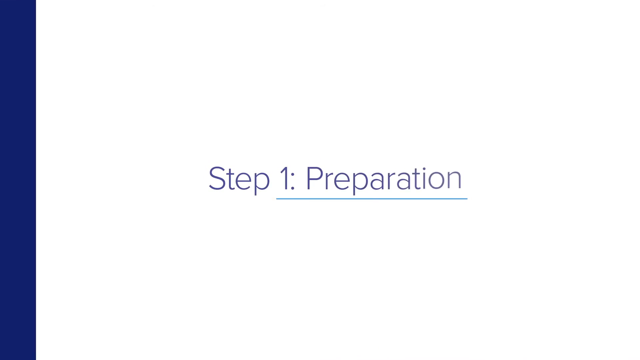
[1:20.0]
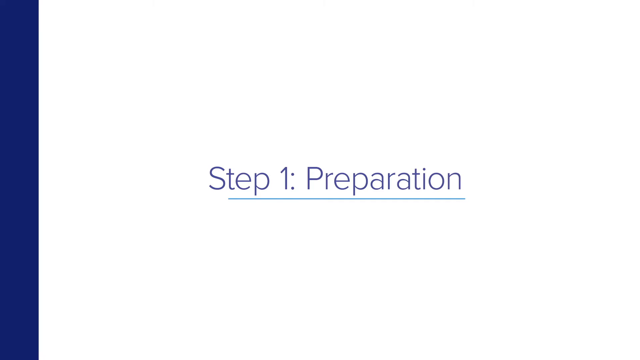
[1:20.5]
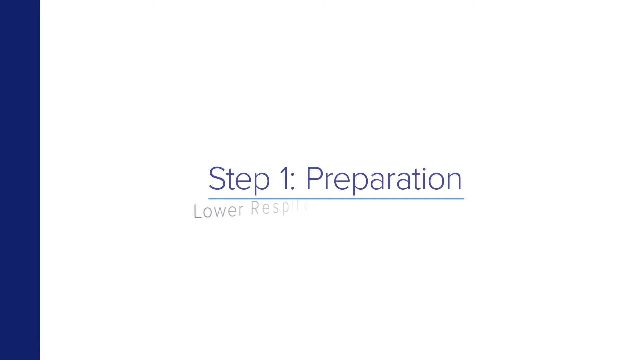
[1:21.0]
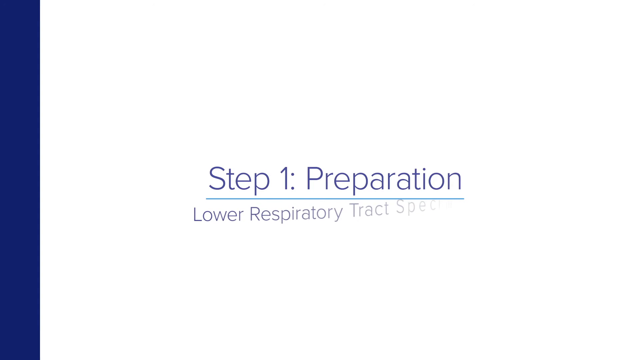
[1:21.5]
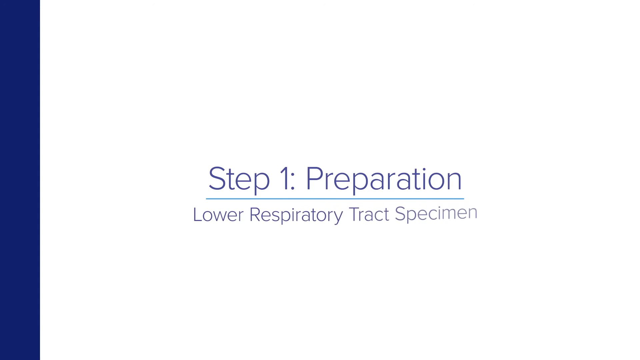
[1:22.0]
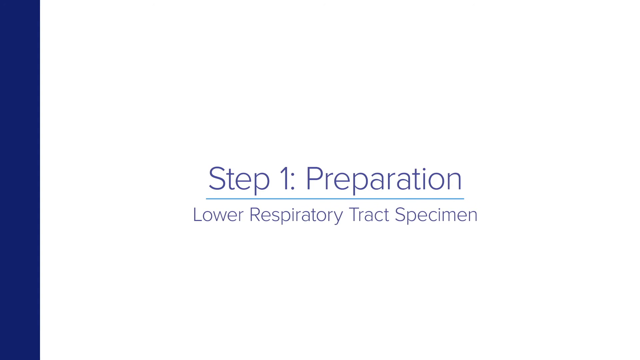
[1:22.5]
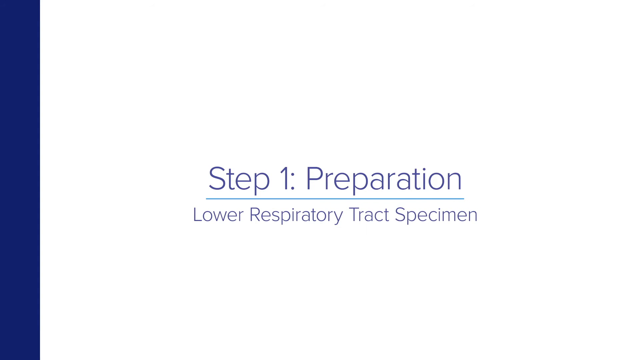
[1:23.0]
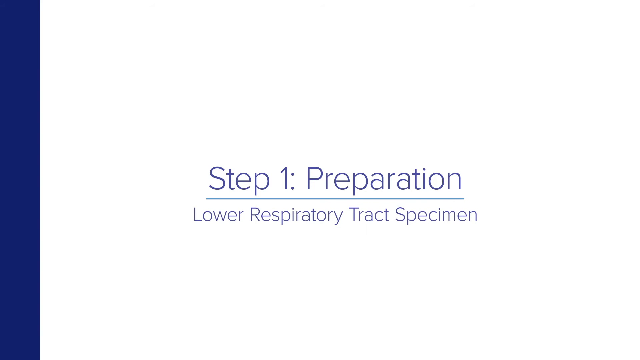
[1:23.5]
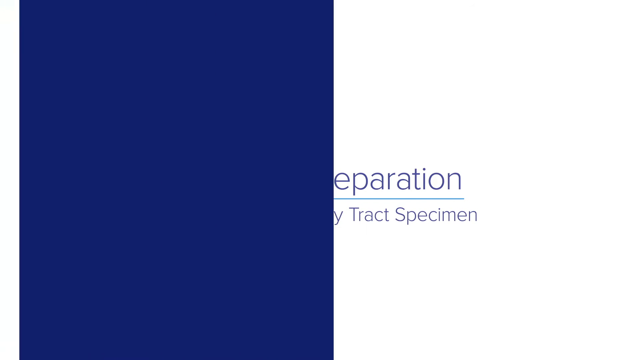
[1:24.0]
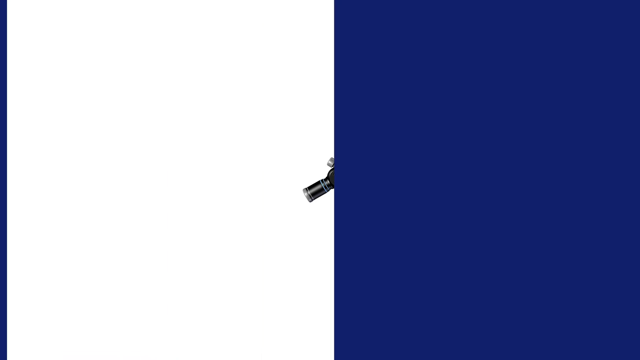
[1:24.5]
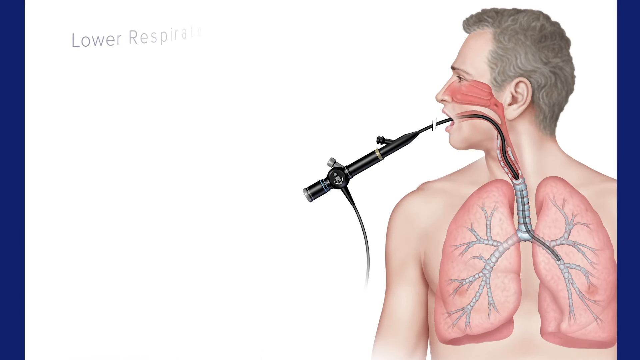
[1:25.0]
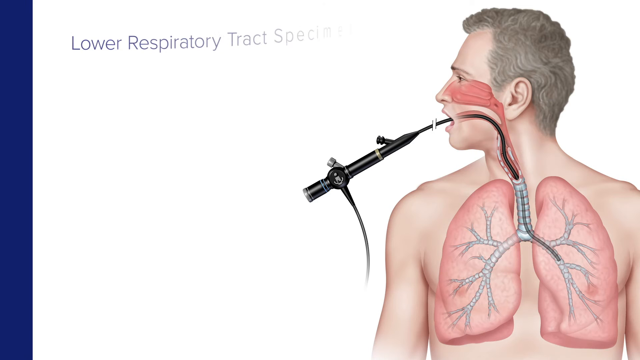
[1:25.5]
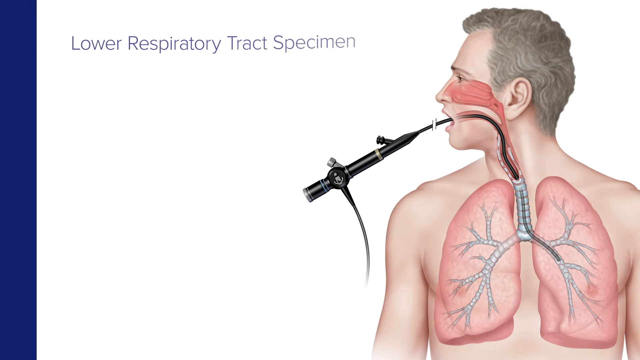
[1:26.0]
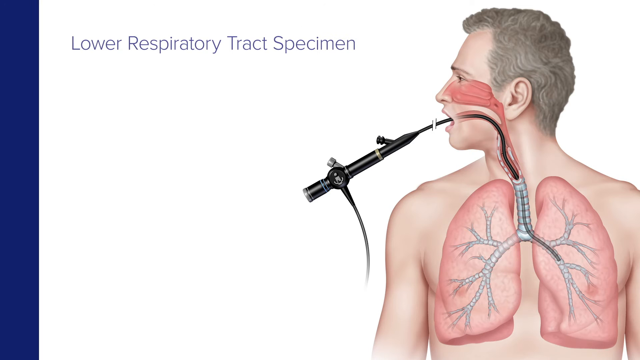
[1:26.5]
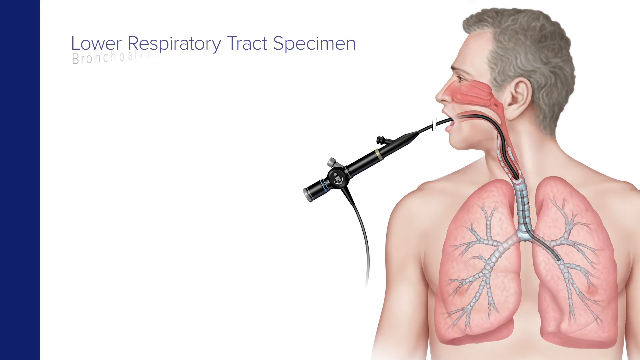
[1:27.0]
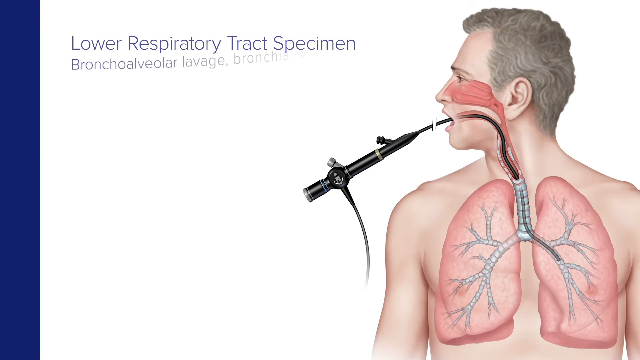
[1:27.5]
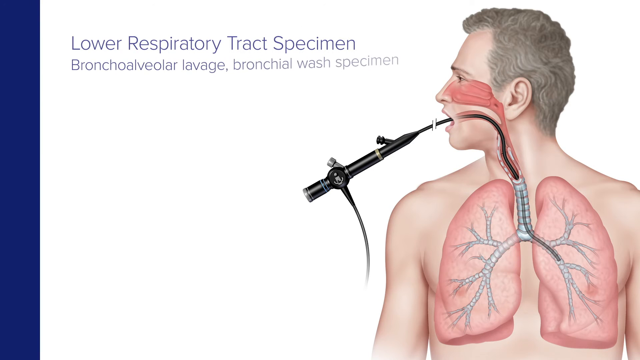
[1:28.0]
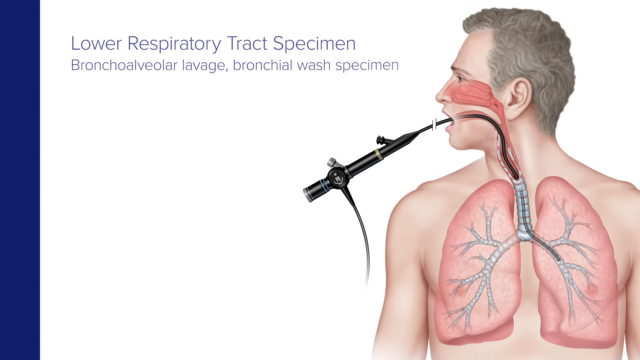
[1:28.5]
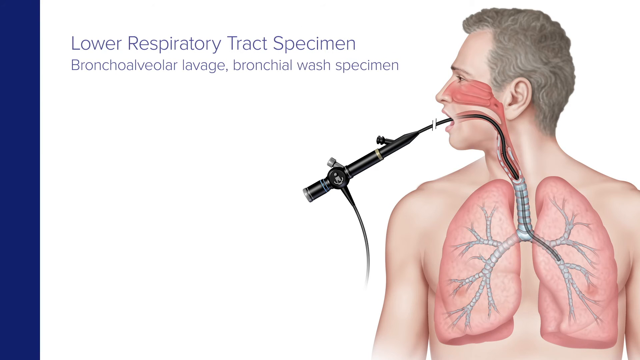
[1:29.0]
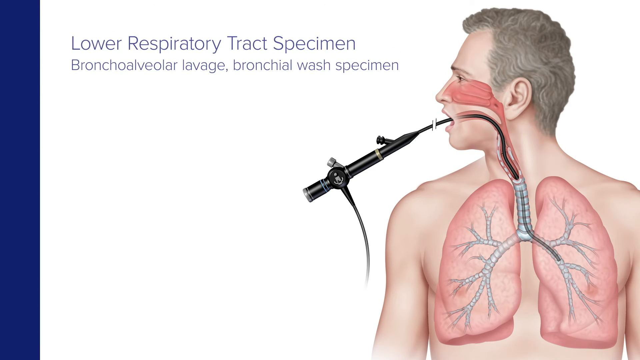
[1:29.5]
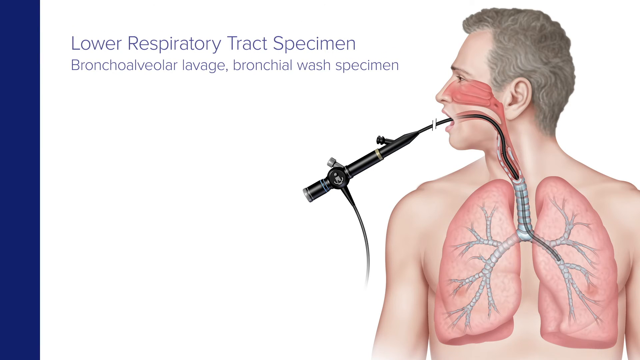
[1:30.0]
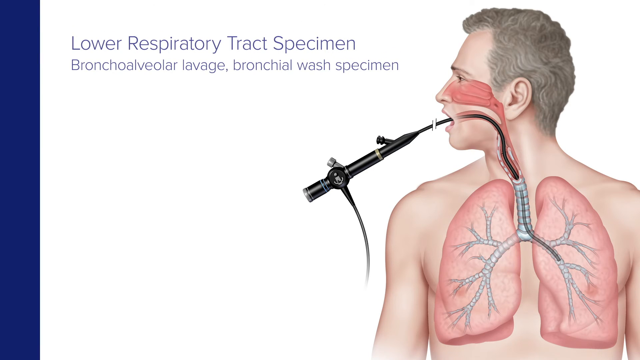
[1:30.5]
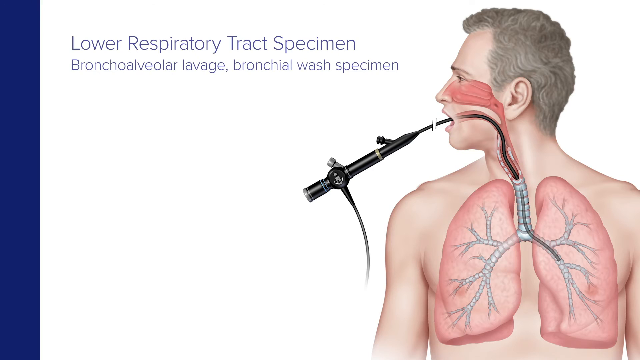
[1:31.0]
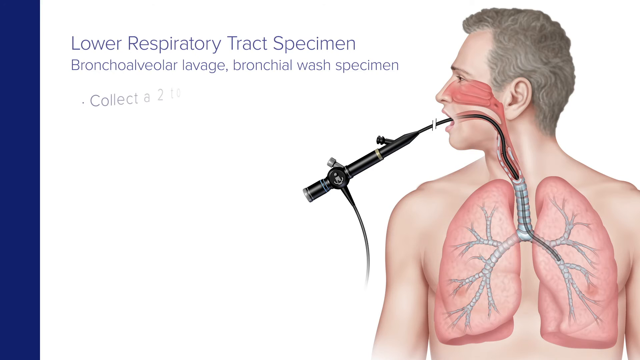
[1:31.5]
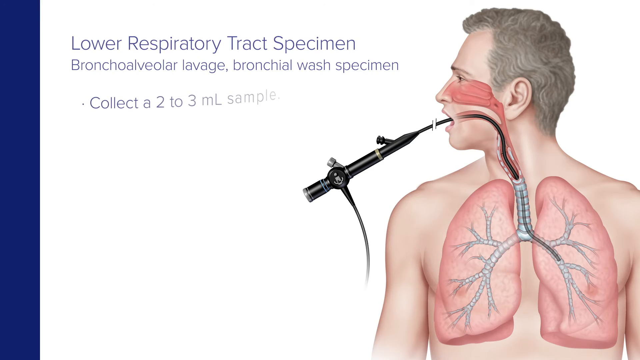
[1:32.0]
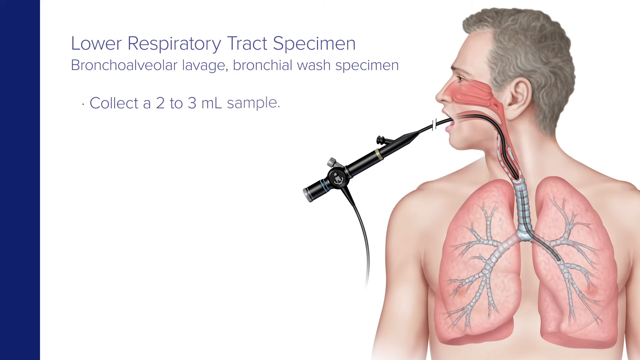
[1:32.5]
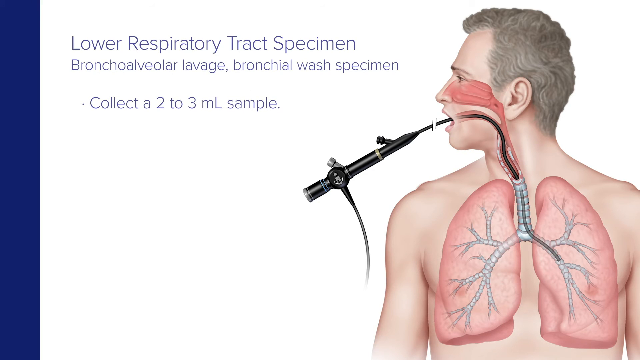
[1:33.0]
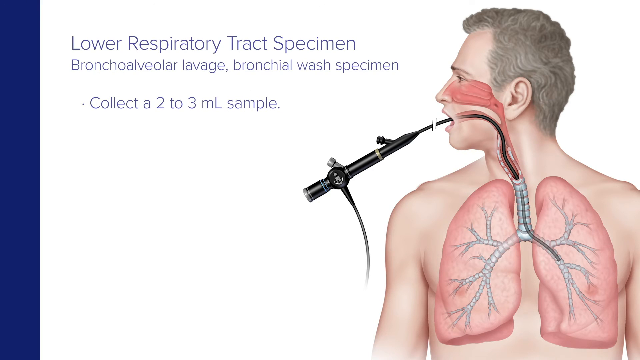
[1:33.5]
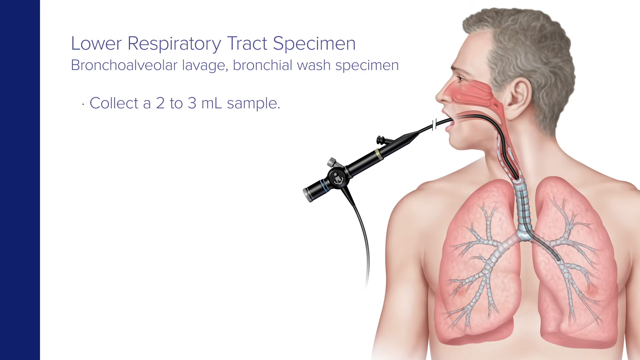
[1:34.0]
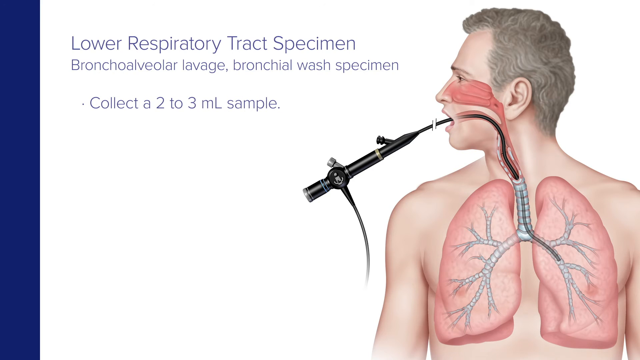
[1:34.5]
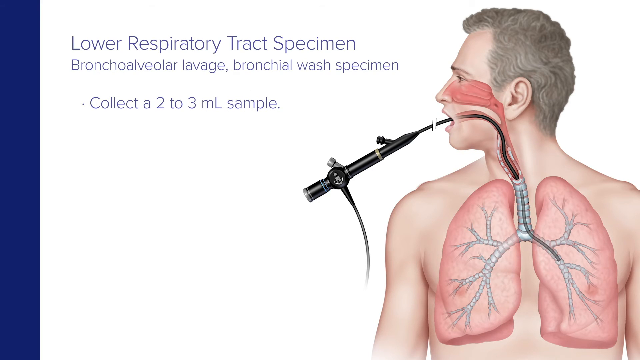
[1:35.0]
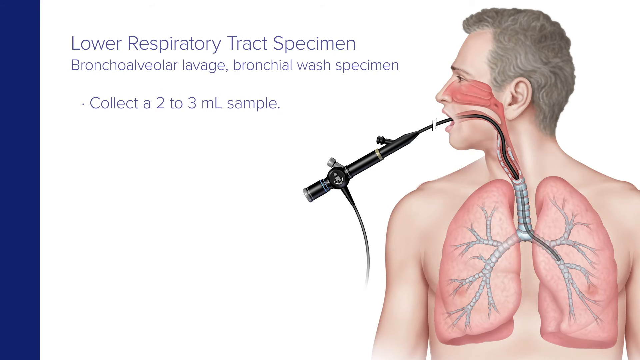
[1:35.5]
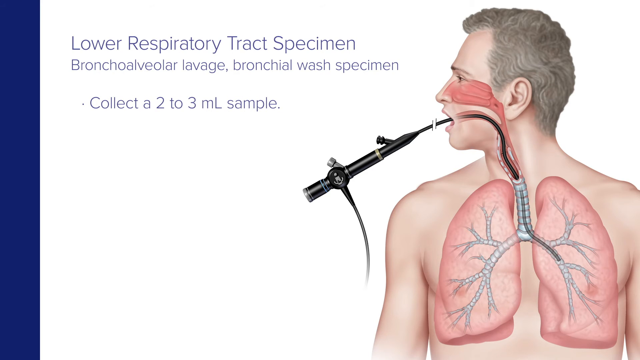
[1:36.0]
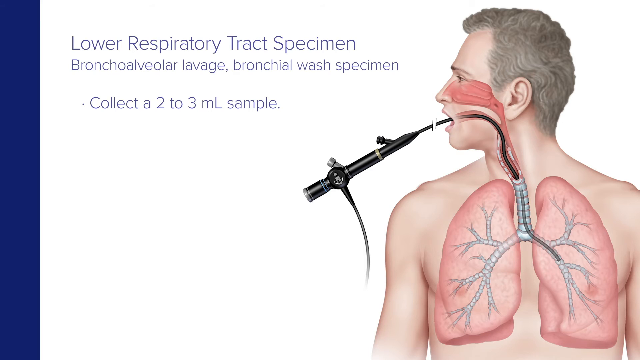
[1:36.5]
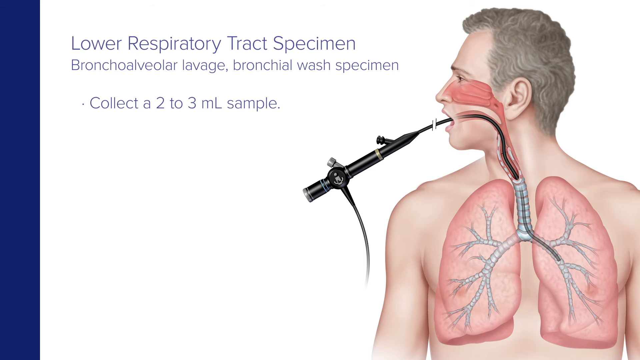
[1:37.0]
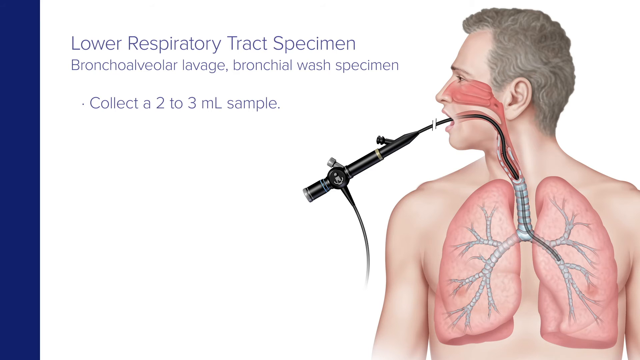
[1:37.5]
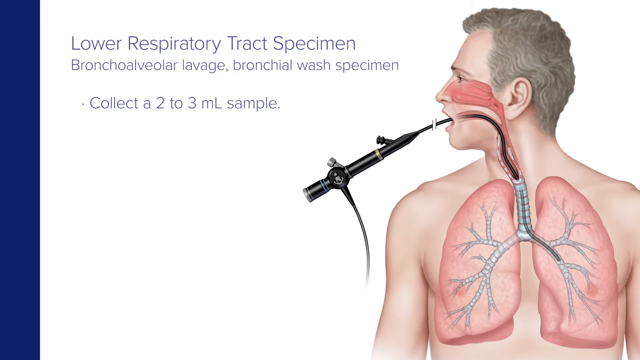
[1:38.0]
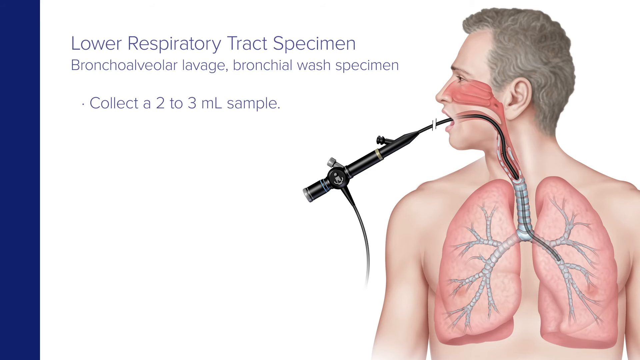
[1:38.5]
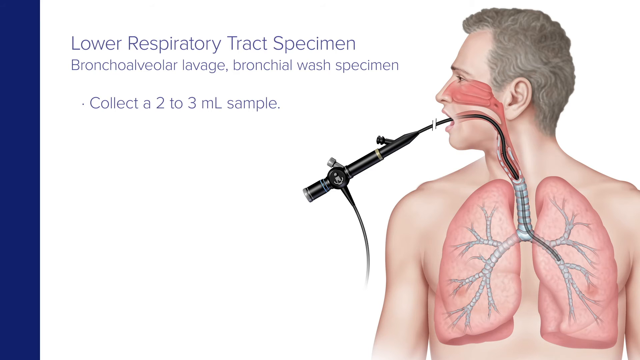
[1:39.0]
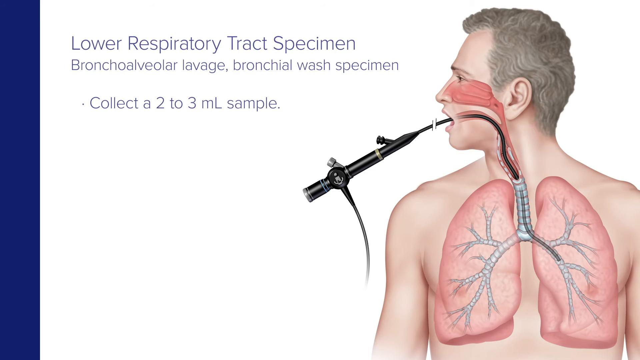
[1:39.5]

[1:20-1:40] A white background with a dark royal blue color on the left shows thin blue lettering reading "step one preparation," a lighter blue line, and underneath it "lower respiratory tract specimen." The blue swipes across to clear it, and the same illustrated man appears, seen from about mid-stomach up, his body facing the viewer but his head turned so that apparently the left side of his face is visible. The earlier details are still there, but the tube is out of his nose. Something that almost looks like a black fishing rod is shown, and his mouth is open; the tubing at its end goes through his mouth and down into his esophagus or whatever is there. An illustration on his chest shows his lungs and their branches, and the tube goes all the way down through that structure into his left lung and down into one of the branches. Lettering at the top says "lower respiratory tract specimen," underneath it "Bronchoalveolar lavage, bronchial wash specimen," and then a bullet point appears that says "collect a 2 to 3 mL sample."